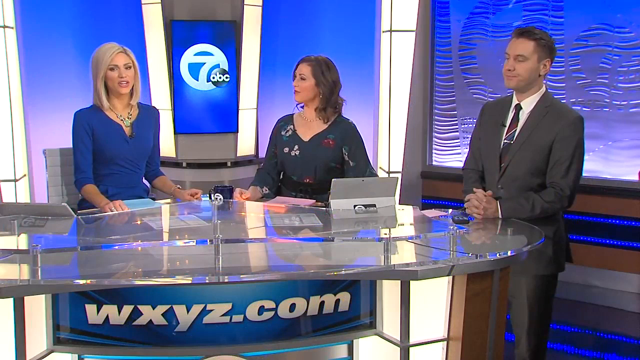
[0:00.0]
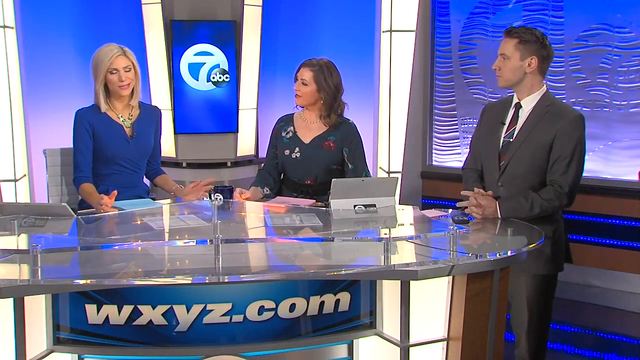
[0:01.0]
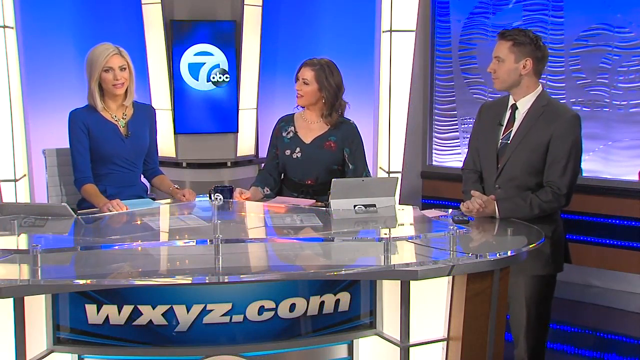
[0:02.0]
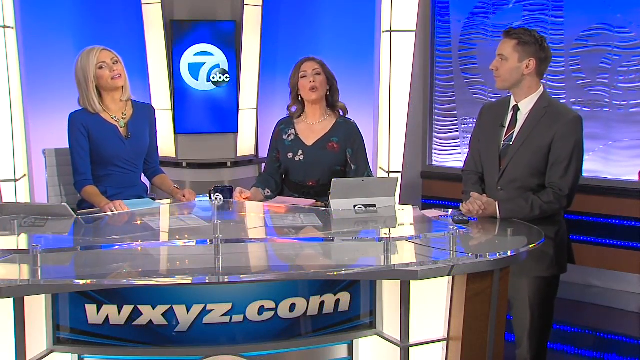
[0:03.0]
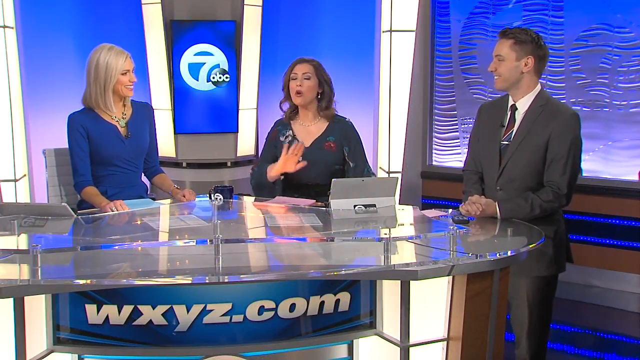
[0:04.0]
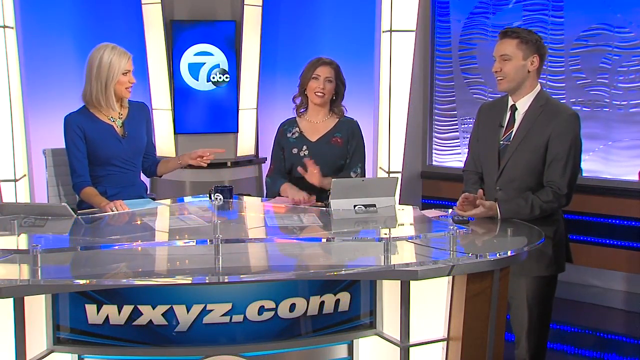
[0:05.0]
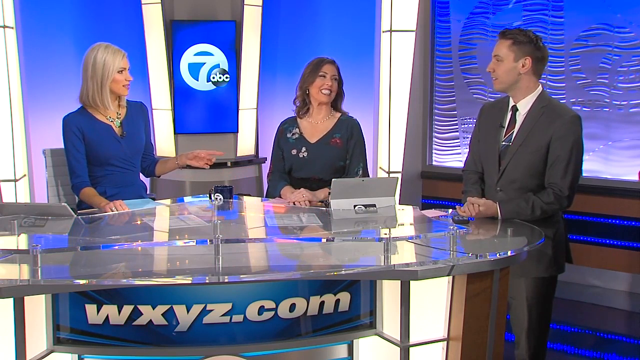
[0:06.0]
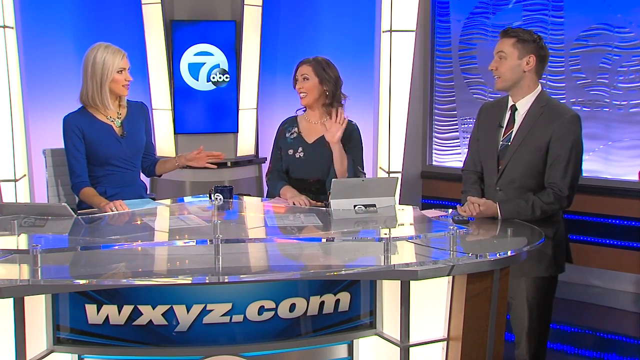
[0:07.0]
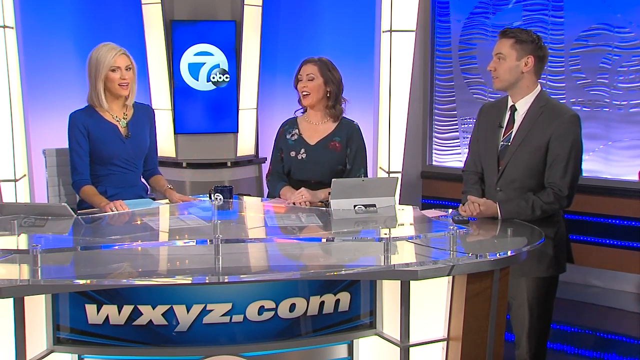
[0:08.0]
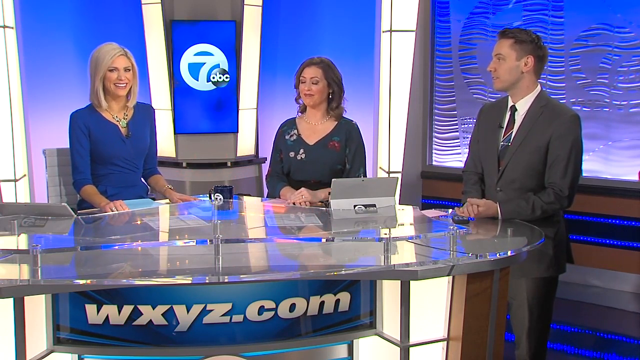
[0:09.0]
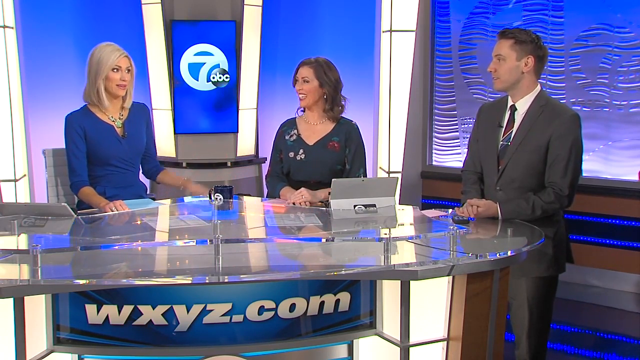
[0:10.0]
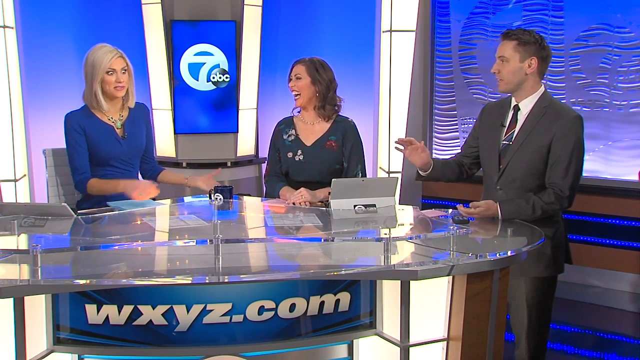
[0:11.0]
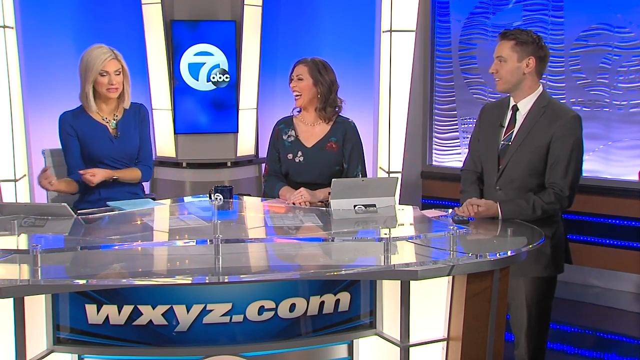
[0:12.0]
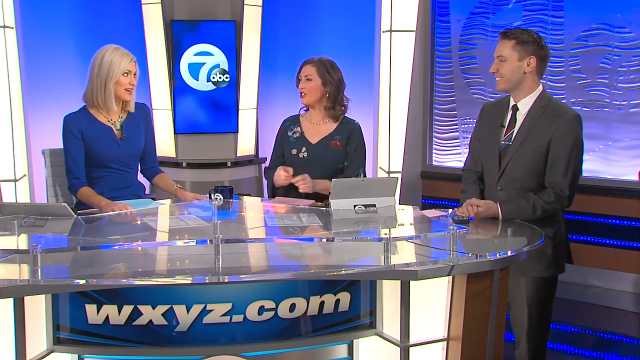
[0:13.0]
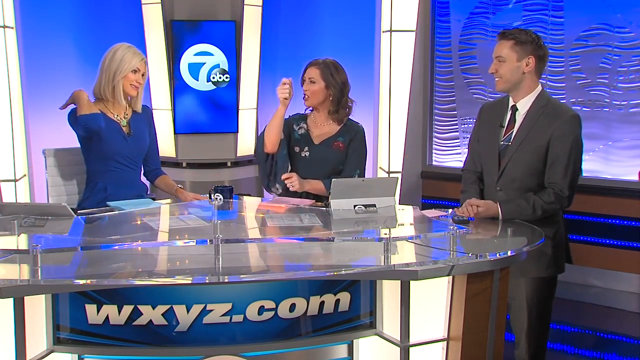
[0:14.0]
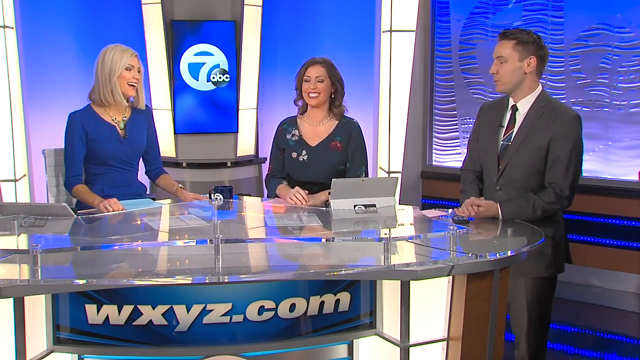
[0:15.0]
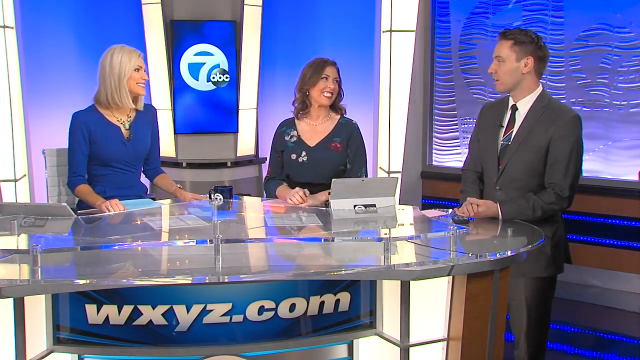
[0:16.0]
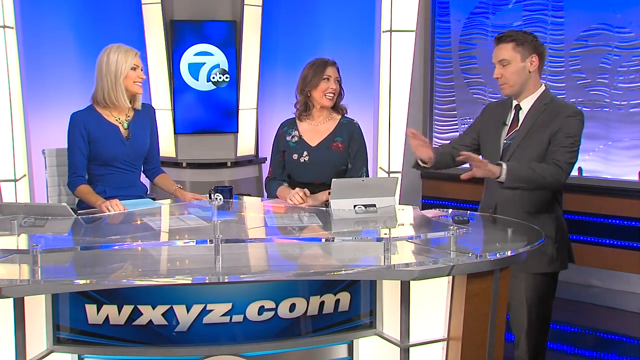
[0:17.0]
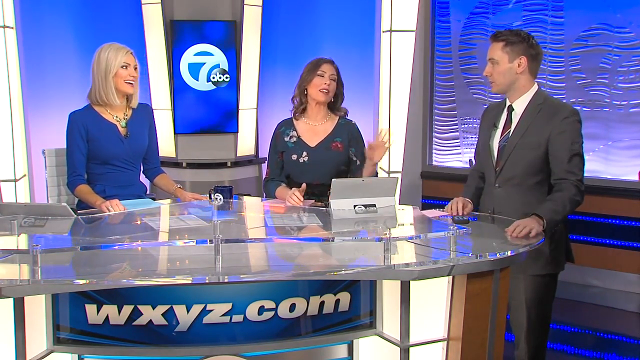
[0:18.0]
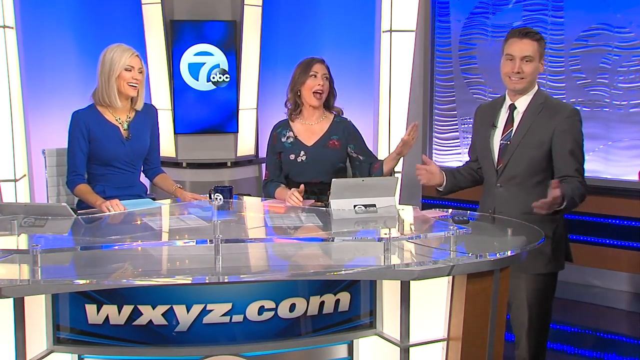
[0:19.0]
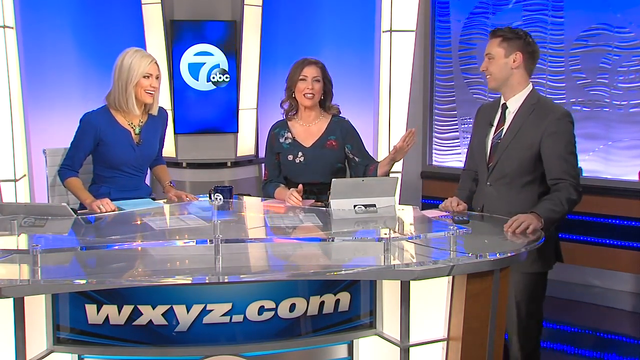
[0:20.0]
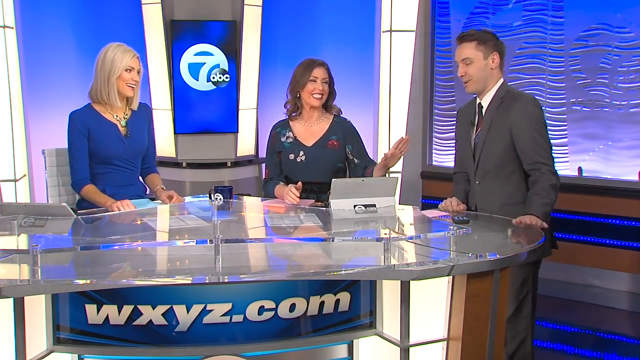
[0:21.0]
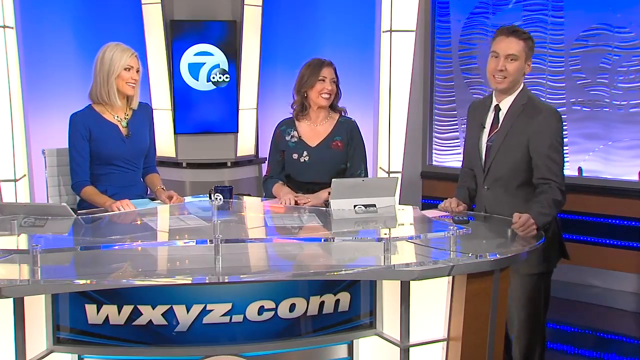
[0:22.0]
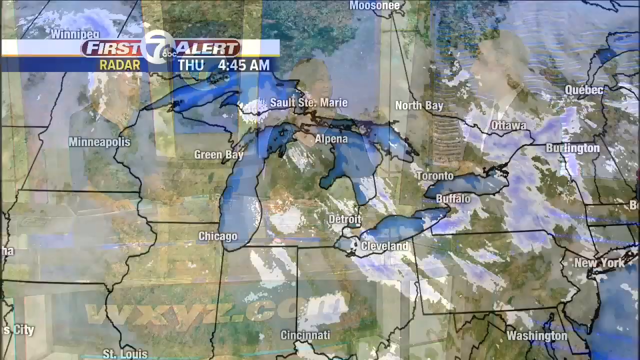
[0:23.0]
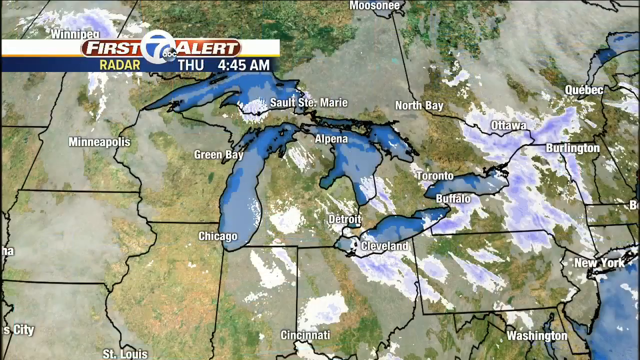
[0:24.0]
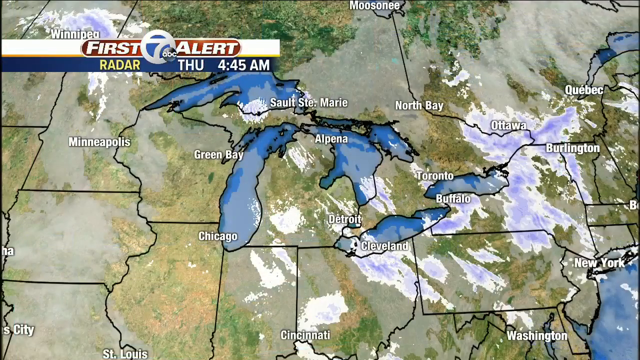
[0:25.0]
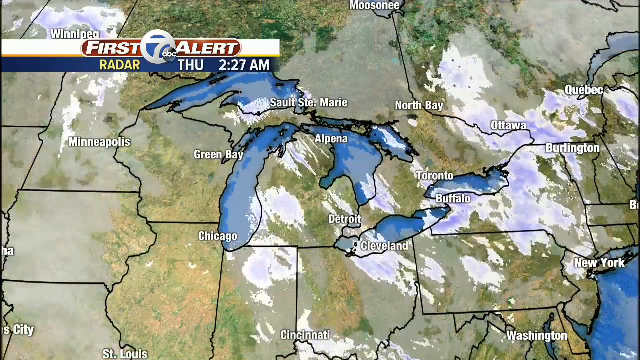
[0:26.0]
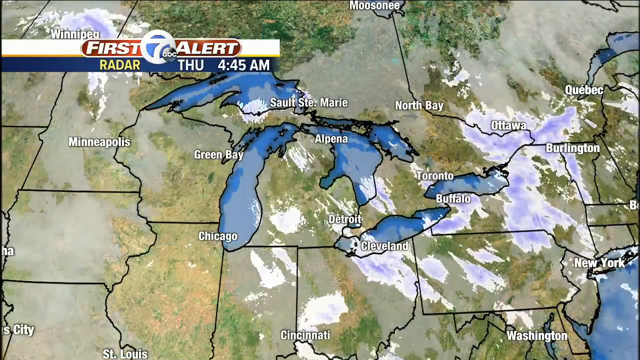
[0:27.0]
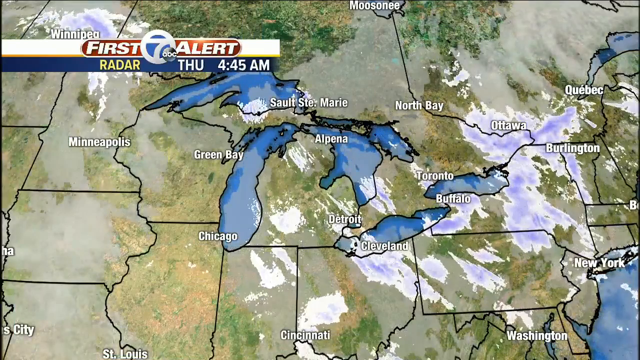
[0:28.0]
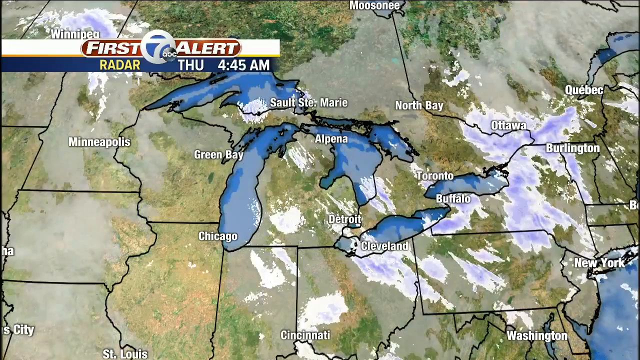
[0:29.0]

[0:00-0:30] In an ABC7 newsroom, a man on the right in a charcoal gray suit rests his hands on the table. He wears a burgundy tie and a white shirt, has brown hair, and looks to be about 38 to 40 years old. Next to him and to the right, with a little space apart, is a woman with brown hair in a black flowered dress, and to her right is a blonde-haired woman in a blue dress. The blonde woman talks, then the brown-haired woman talks and moves her arms. She laughs and looks at the man to the left, who talks and motions with his hand. The woman in the blue dress motions with her hands and scratches her shoulder. The brown-haired woman in the middle talks, and then the man talks. A weather radar appears with the text "First 7 Alert. Radar Thursday, 4.45am"; it looks like the Great Lakes area.